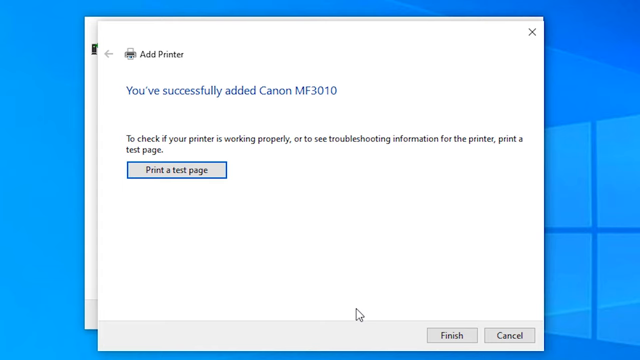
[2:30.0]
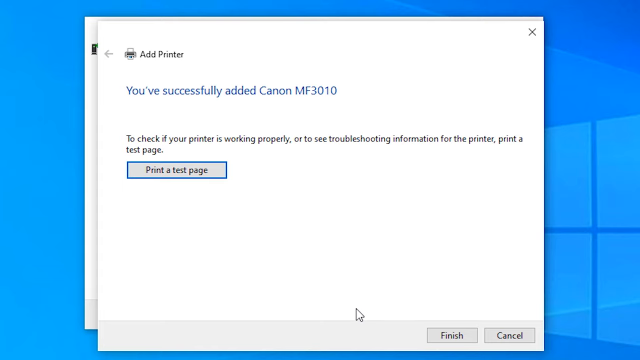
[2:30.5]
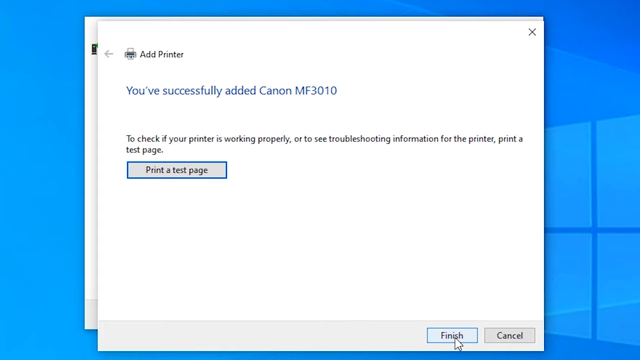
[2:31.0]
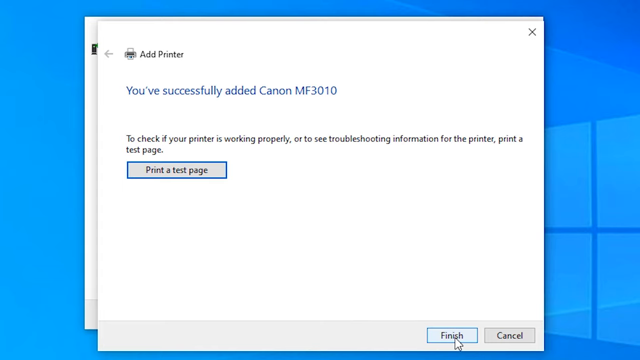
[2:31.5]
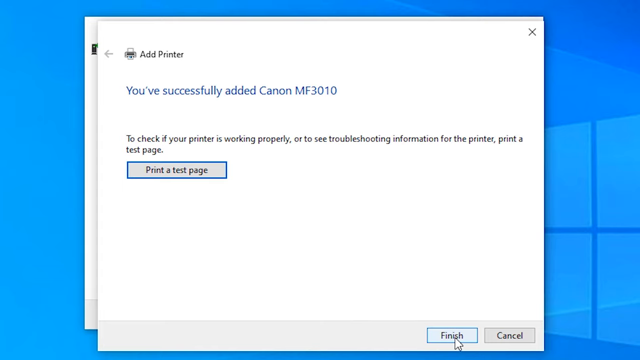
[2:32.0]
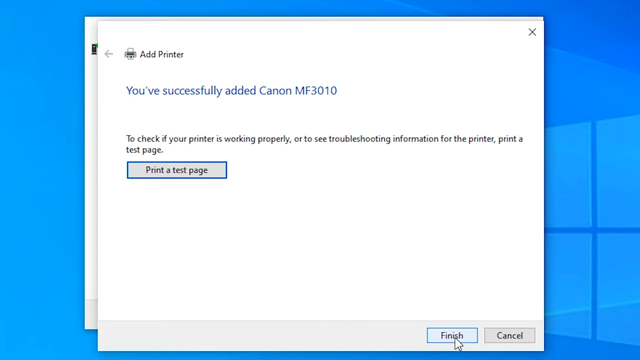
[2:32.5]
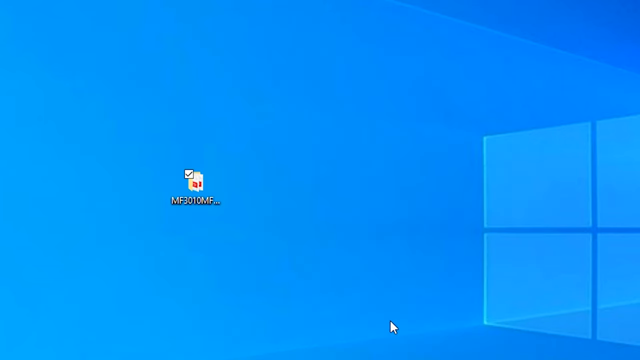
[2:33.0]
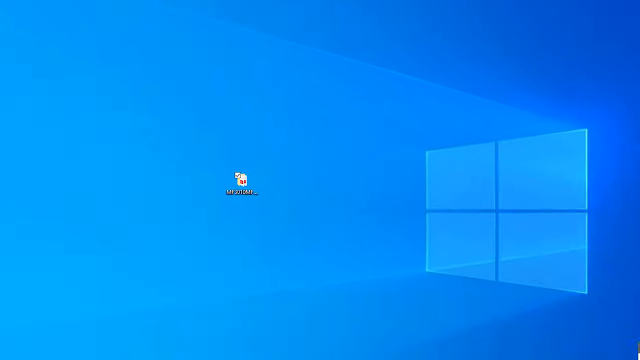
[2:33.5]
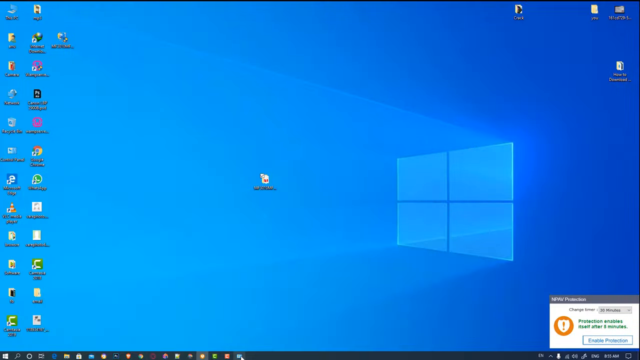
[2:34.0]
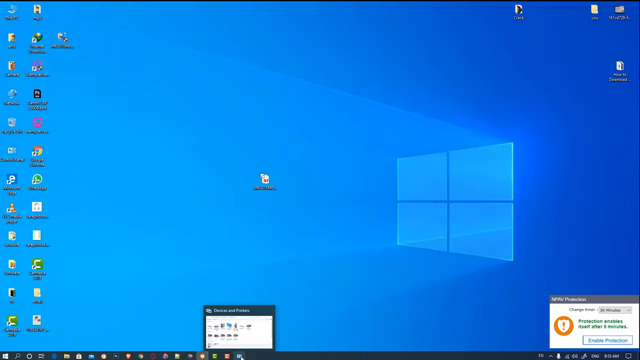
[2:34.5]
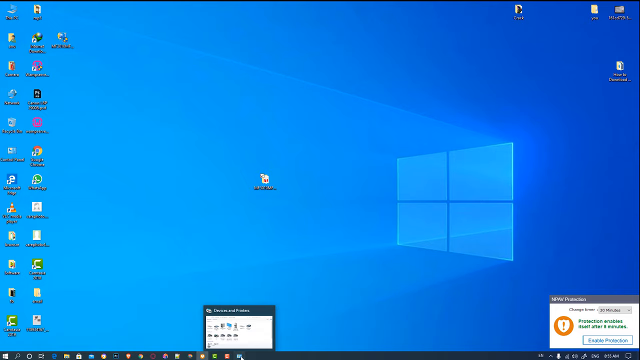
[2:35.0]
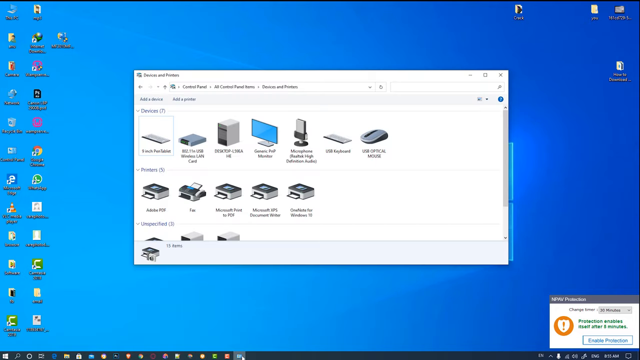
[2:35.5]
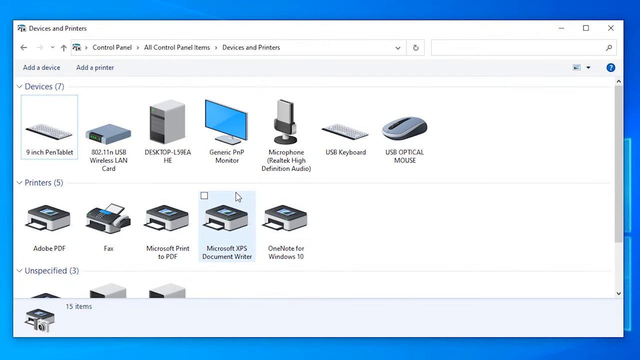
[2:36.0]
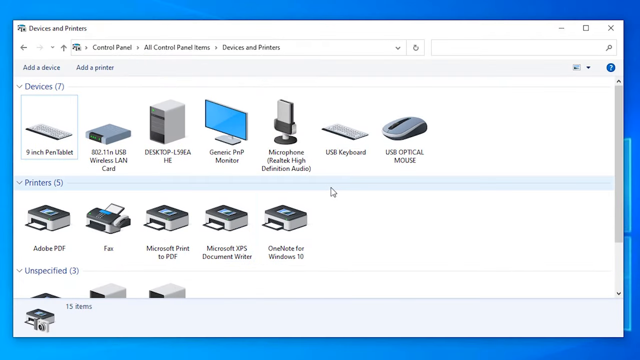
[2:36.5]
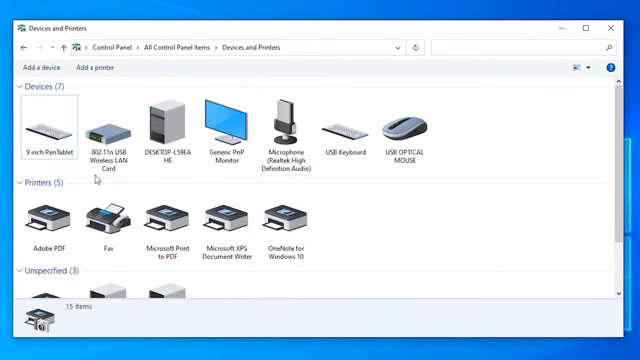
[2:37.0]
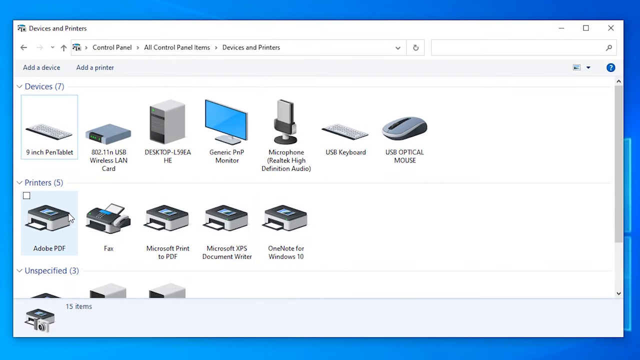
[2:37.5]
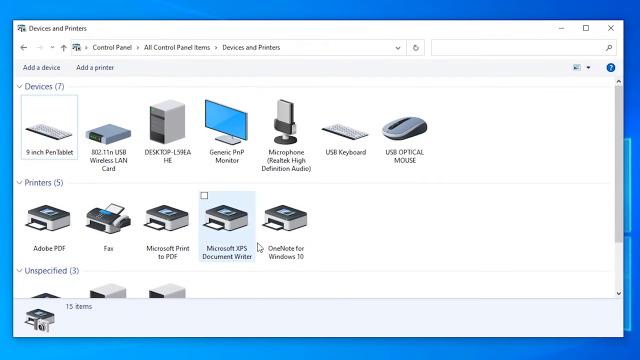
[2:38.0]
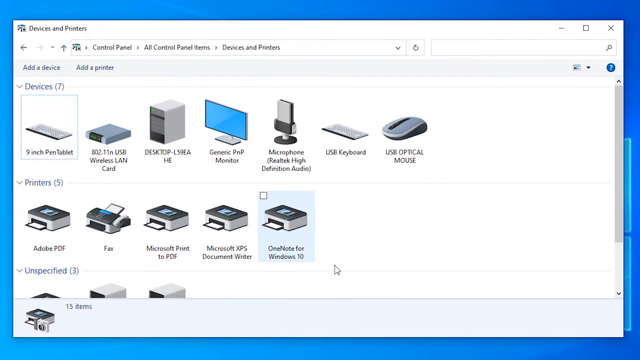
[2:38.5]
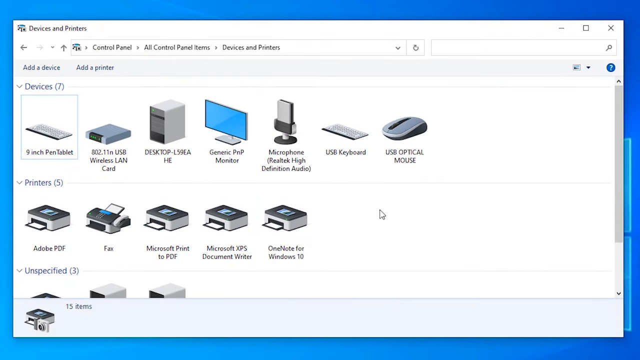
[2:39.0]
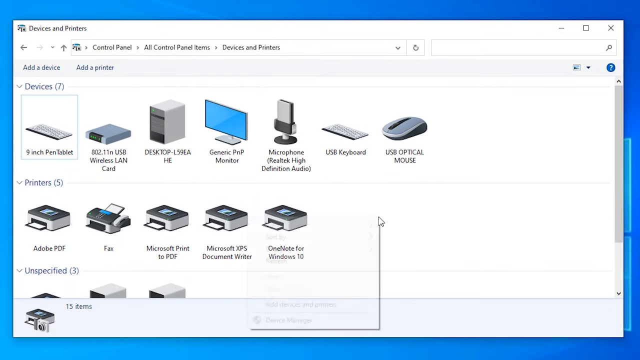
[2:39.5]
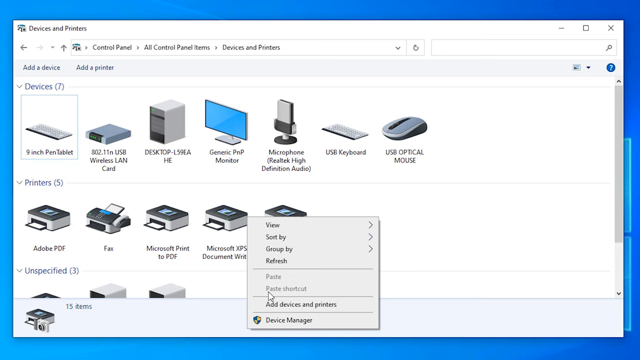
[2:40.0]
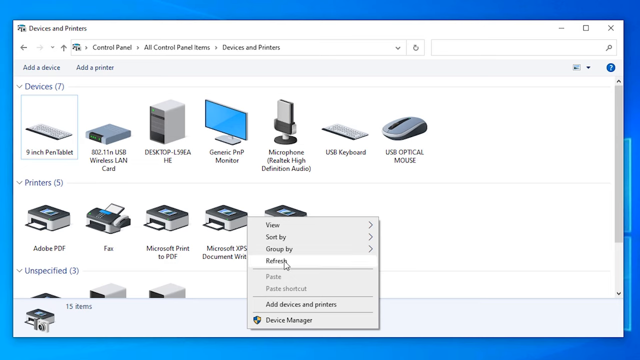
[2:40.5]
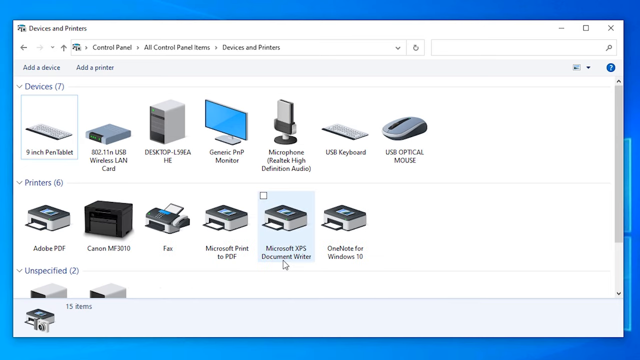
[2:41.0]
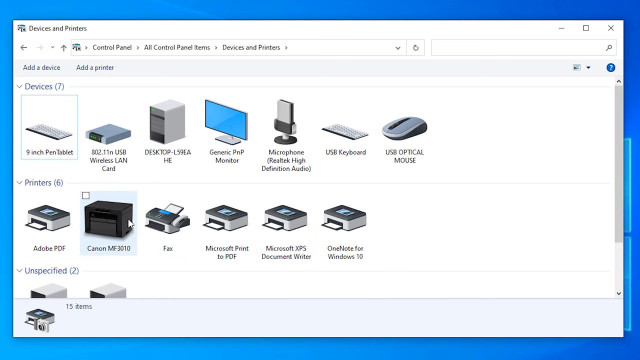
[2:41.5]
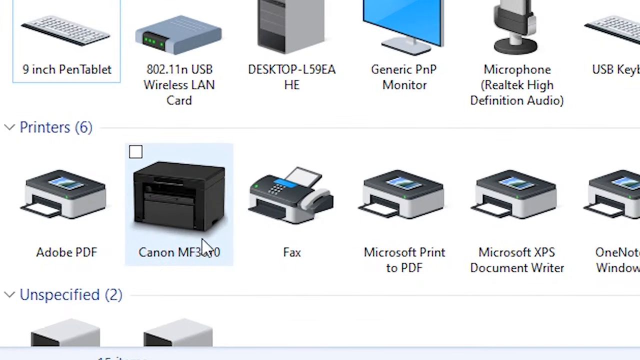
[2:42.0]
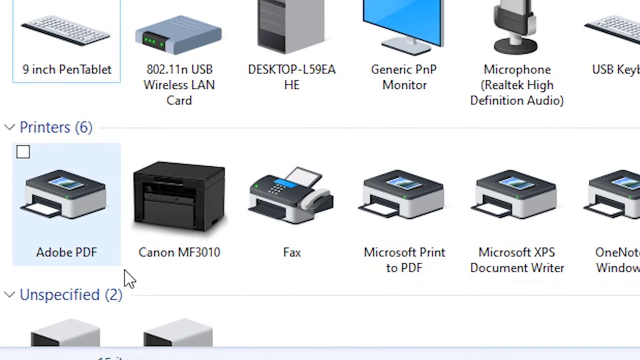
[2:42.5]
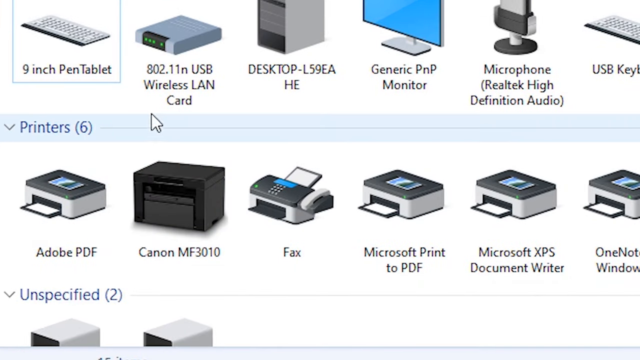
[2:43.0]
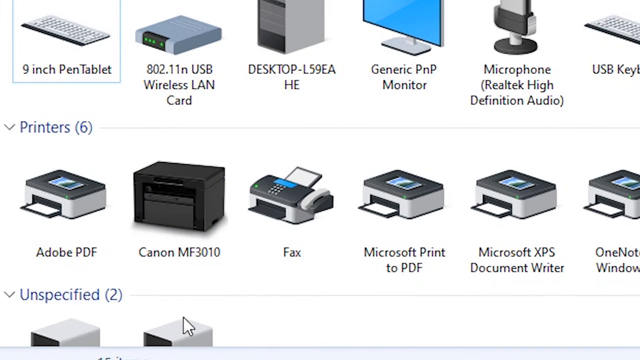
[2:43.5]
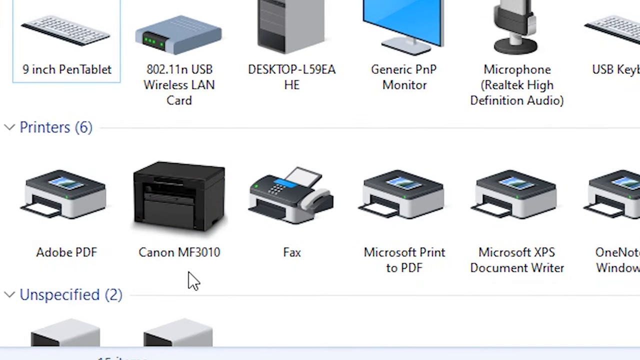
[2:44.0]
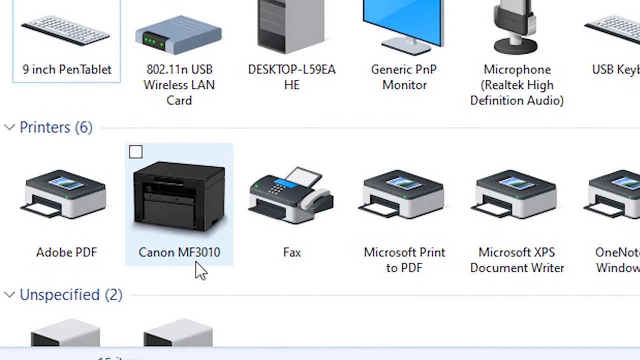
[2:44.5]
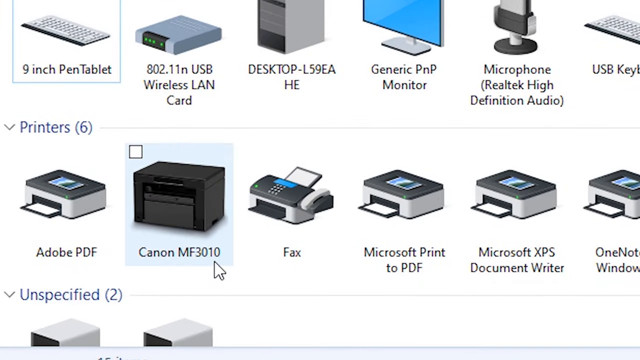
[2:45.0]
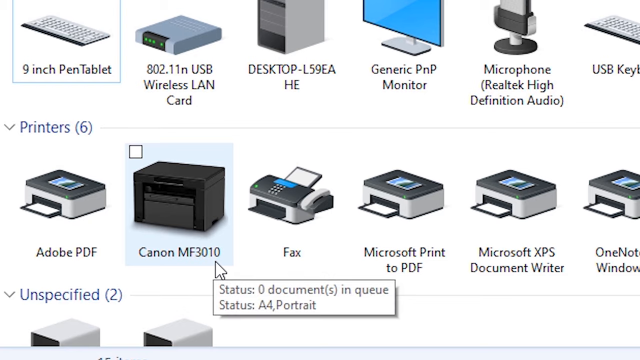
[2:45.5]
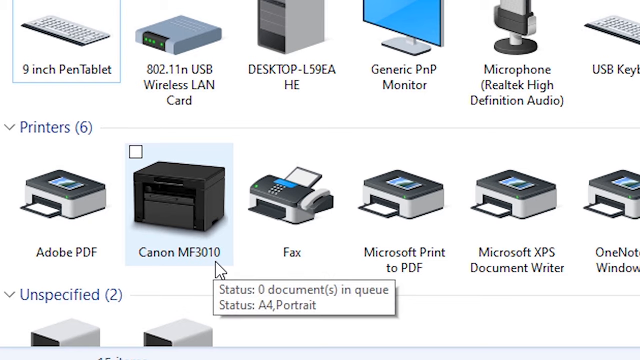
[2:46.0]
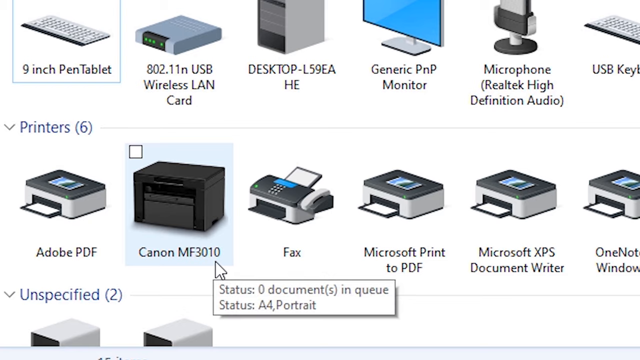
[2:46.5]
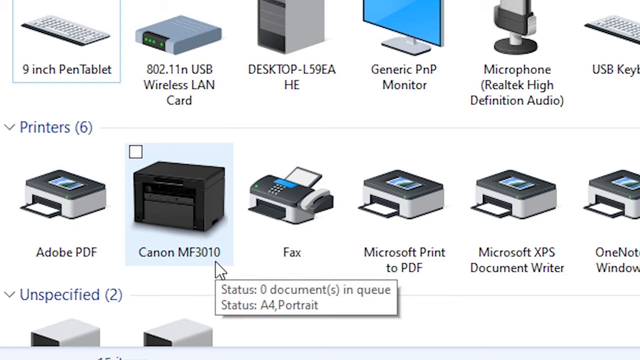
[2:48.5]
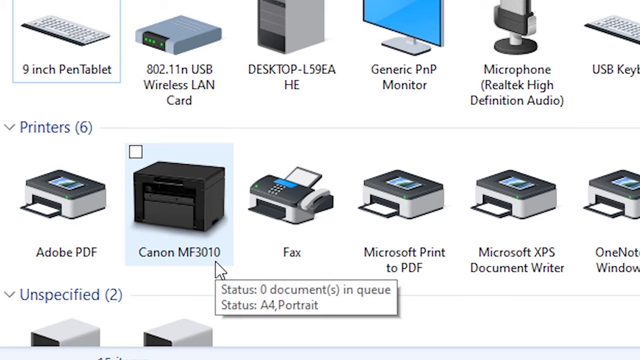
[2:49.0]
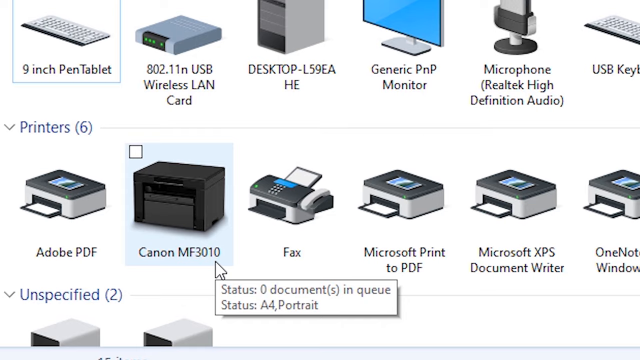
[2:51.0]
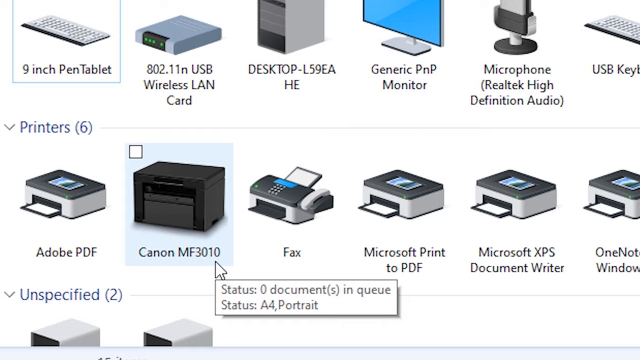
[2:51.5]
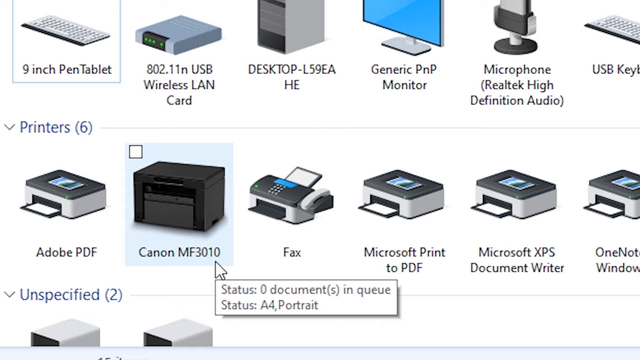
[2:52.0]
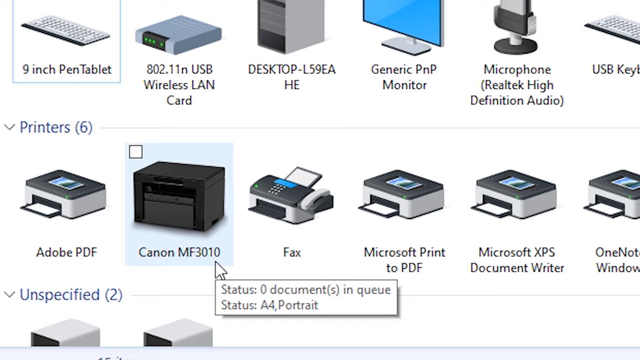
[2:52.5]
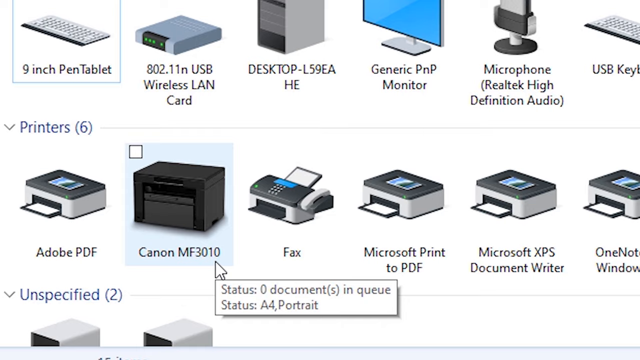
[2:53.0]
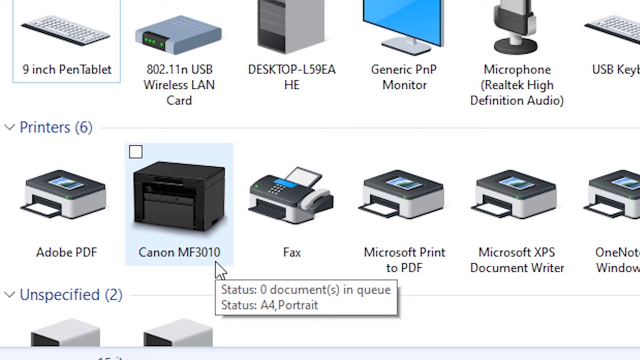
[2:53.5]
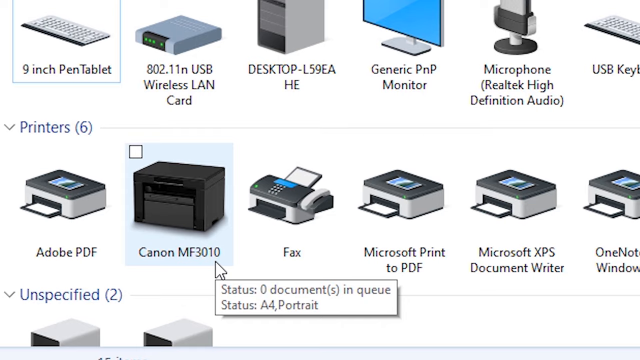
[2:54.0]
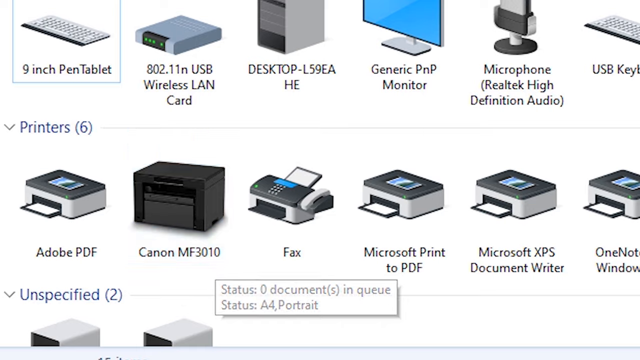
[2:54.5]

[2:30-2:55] A window on the computer screen says "Add Printer", and underneath is text that says "you successfully added Canon MF3010". The user exits that window, clicks a button, and is back on the home screen, which has a blue background with the Microsoft Windows logo, an isolated icon in the middle of the screen, and all the other icons around the outside of the screen in something like two columns. They seem to click on an option at the bottom of the screen, and a window with a whole bunch of icons that look like computer cards appears. They highlight one of the icons that looks like a printer, seem to right-click, and a menu pops up; they click an option in the menu. The cursor then starts circling the black icon that looks like a printer, which has the text "Canon MF3010" underneath it.